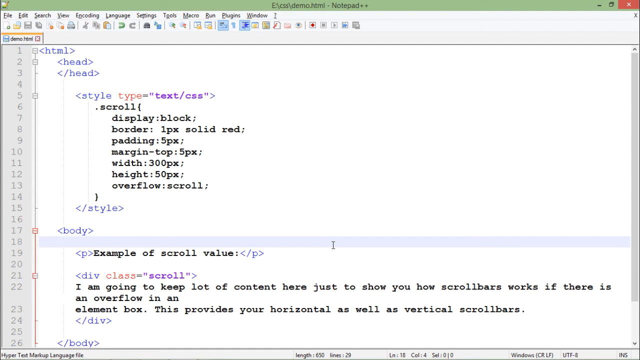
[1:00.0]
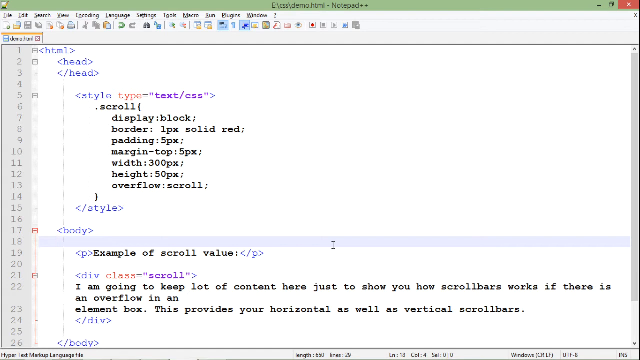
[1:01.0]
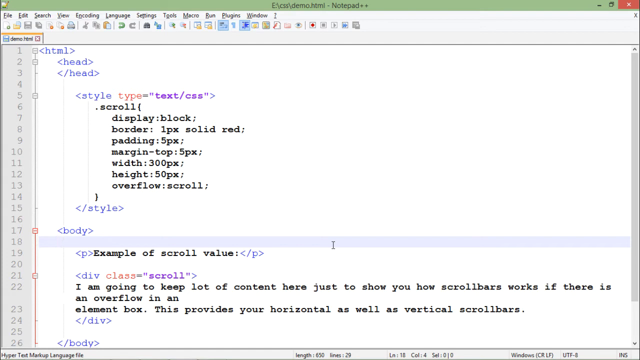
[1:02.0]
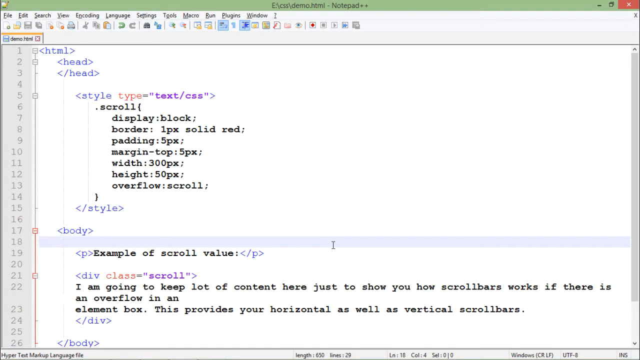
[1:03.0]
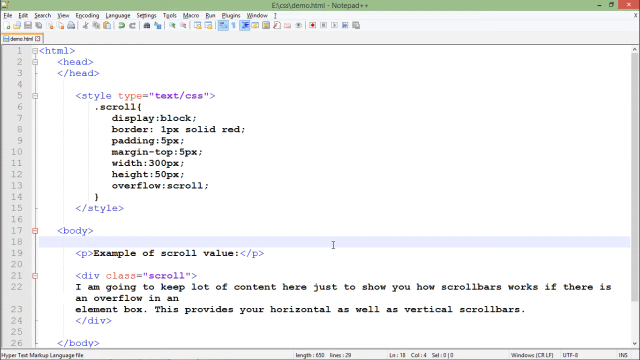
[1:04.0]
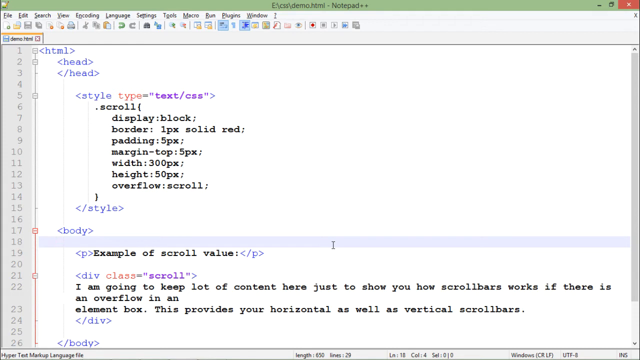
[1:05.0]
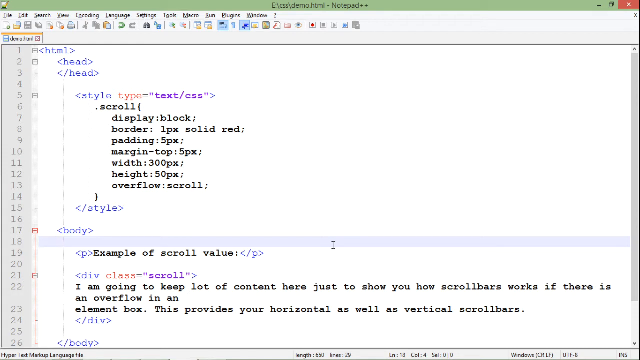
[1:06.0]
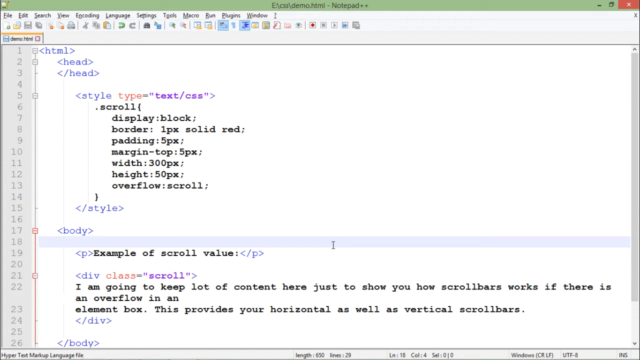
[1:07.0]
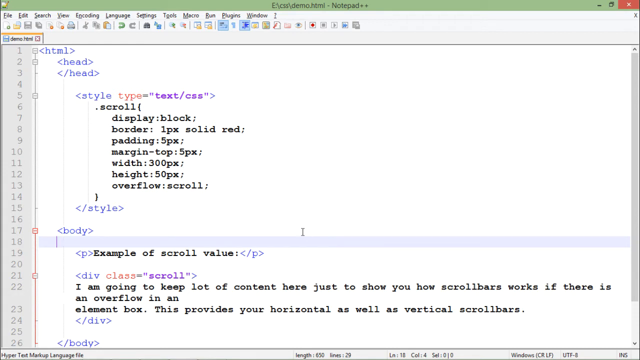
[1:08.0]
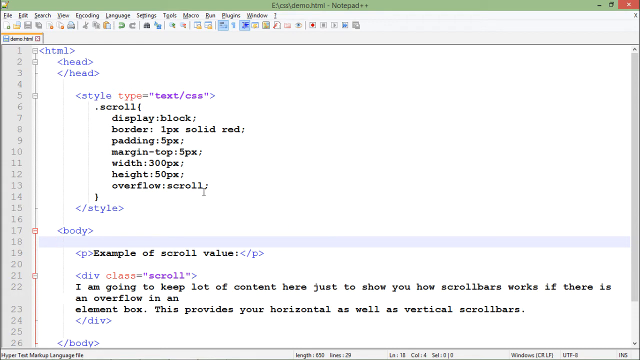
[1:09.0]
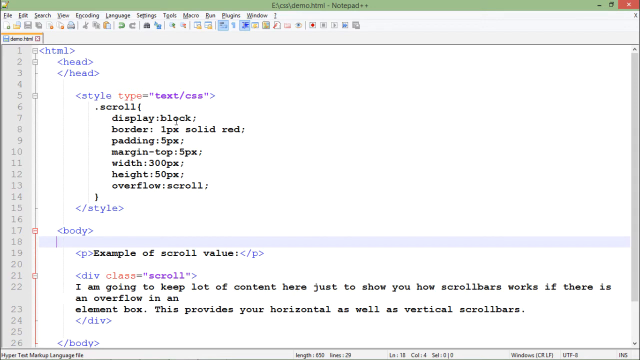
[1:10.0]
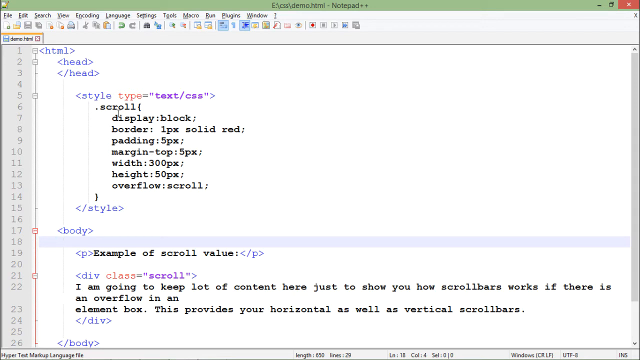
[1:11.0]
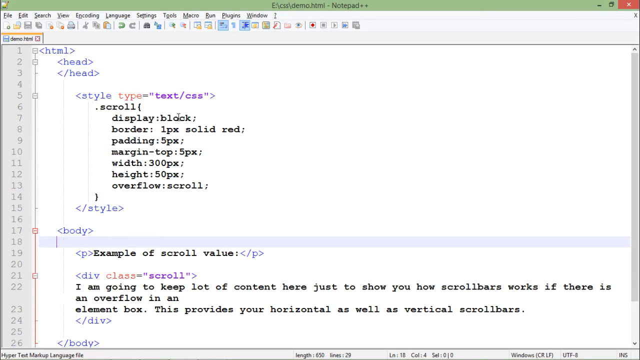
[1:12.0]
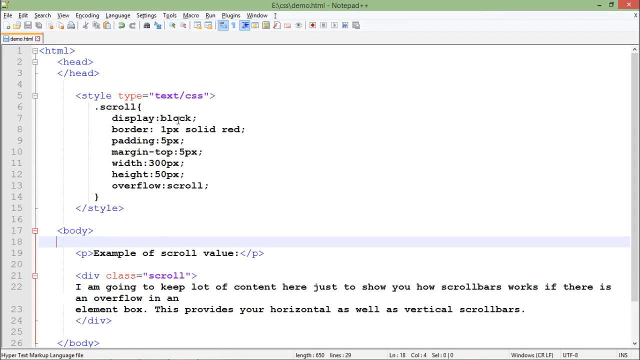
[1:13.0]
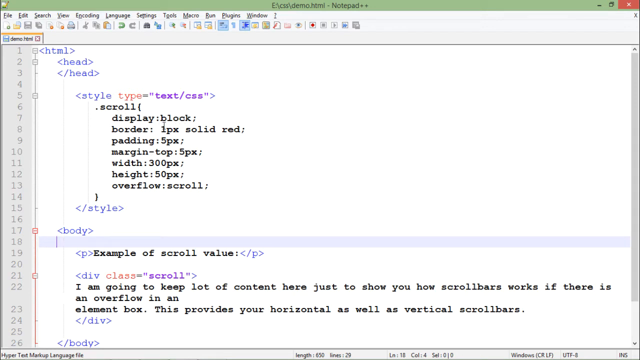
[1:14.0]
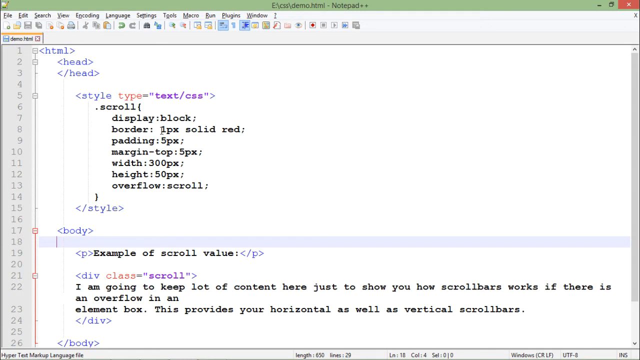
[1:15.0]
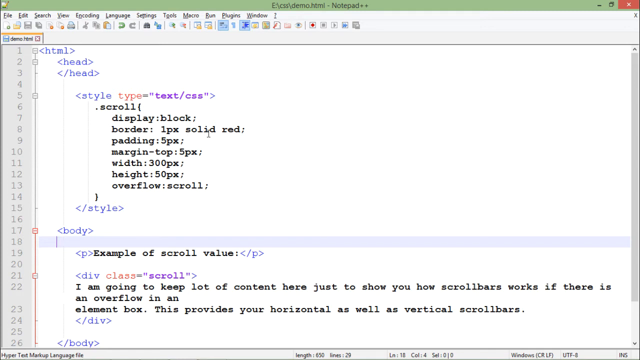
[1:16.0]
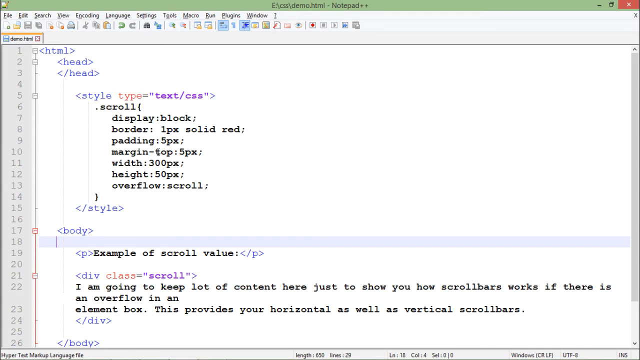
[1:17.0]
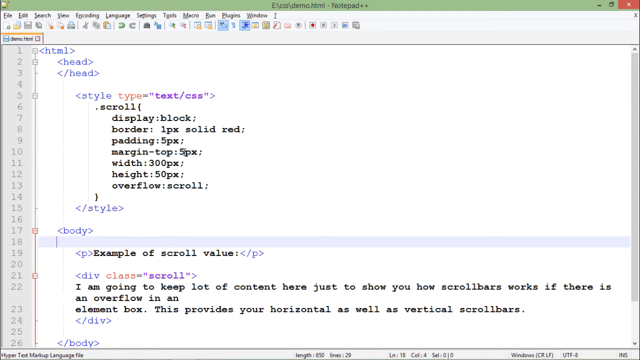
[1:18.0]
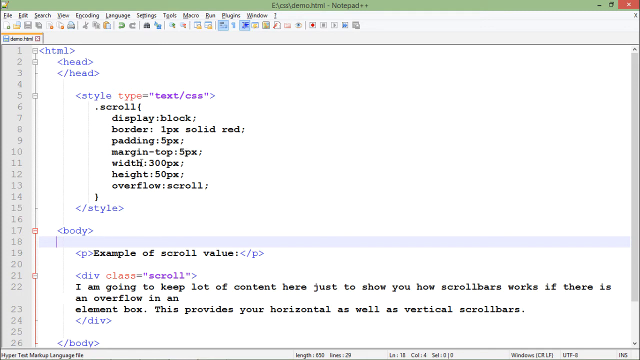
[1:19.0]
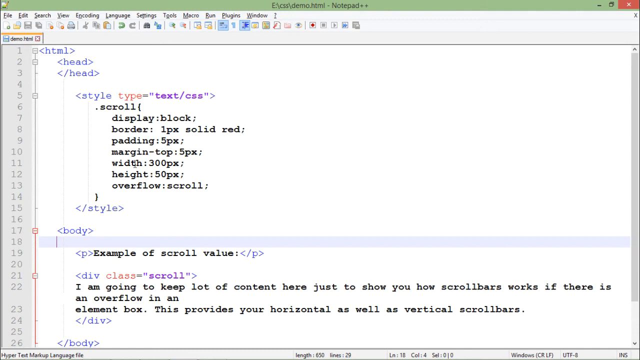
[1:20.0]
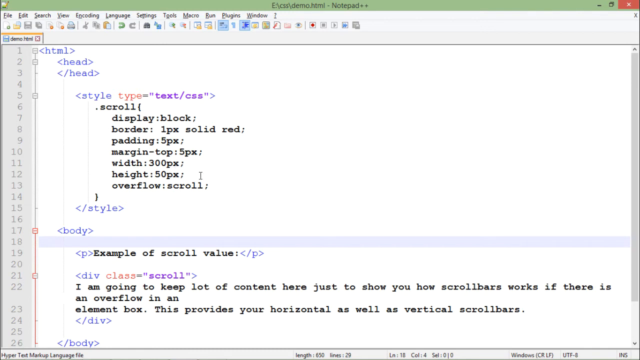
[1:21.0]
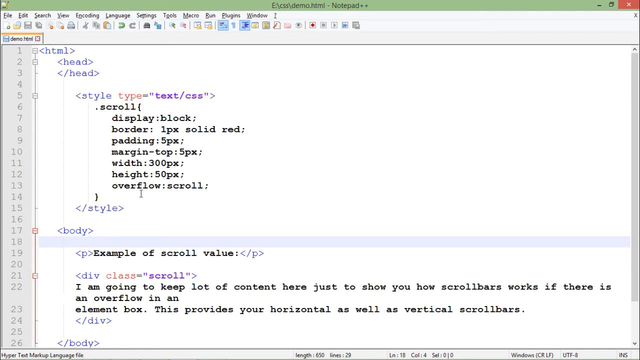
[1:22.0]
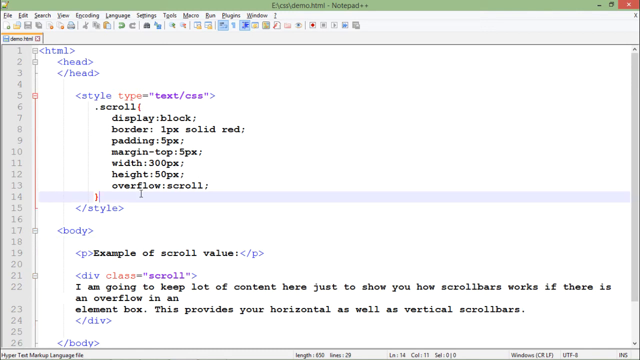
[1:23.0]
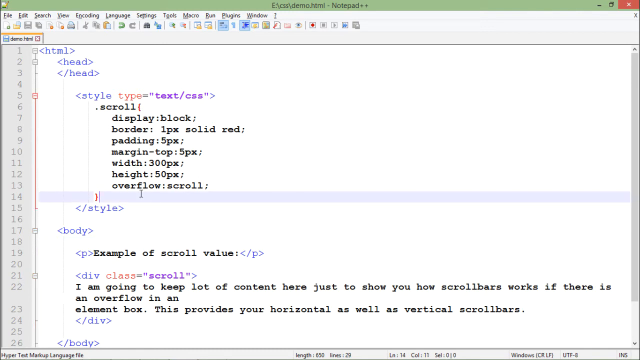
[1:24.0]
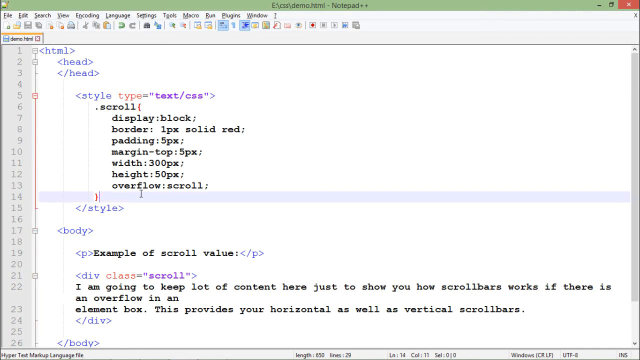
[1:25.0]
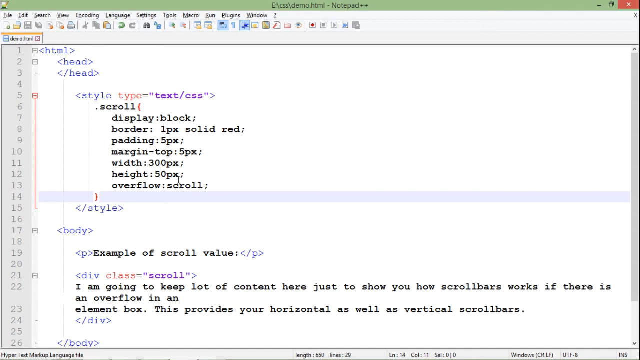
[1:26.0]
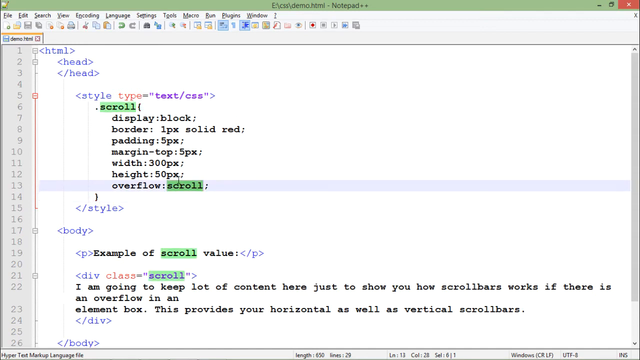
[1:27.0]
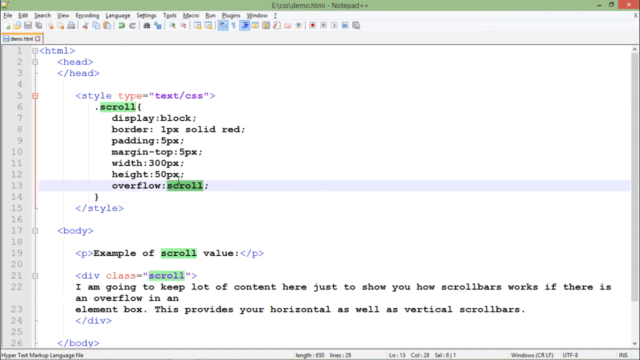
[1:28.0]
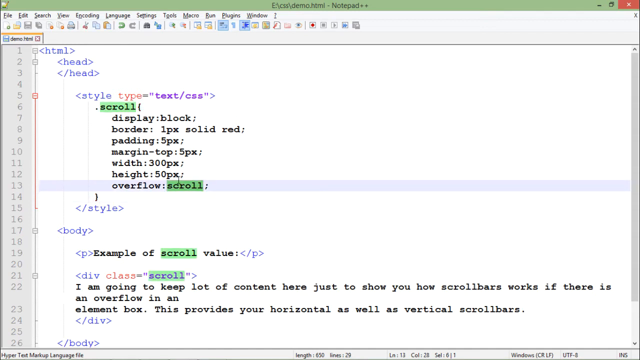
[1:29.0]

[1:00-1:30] A Notepad++ document is open to an HTML file called demo.html. The code includes a pair of empty head tags at the top, style tags underneath with some CSS code, and body tags below that with some text in paragraph and div tags. The line selector is on line 18, where a vertical bar blinks at the beginning of the line. The cursor hovers over the CSS in the style tag, which gives the code for .scroll with details including display: block, border: 1px solid red, padding: 5px, margin-top: 5px, width: 300px, height: 50px, and overflow: scroll. The user clicks on line 14, right under the last line of CSS, and then clicks the word scroll on line 13, which highlights all the instances of scroll in the document with a green box: on line 6, line 13, line 19 and line 21.